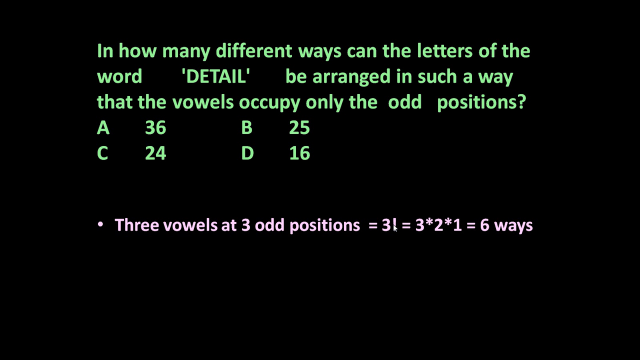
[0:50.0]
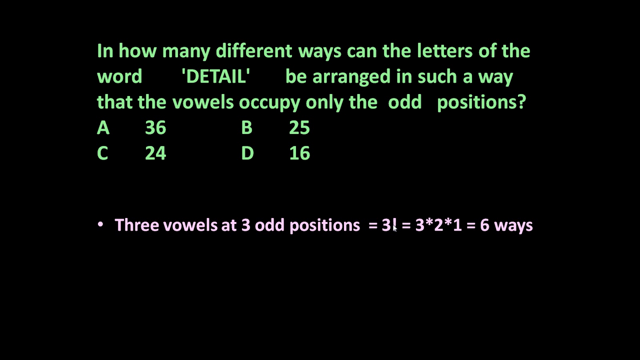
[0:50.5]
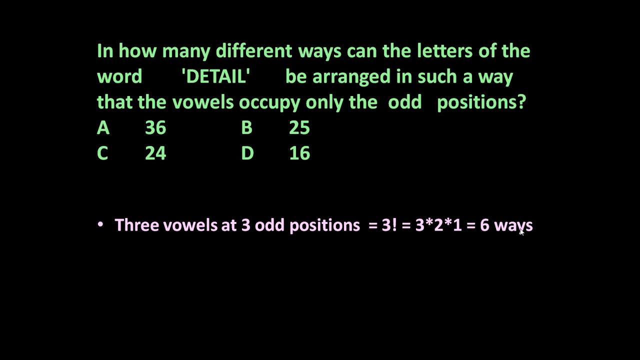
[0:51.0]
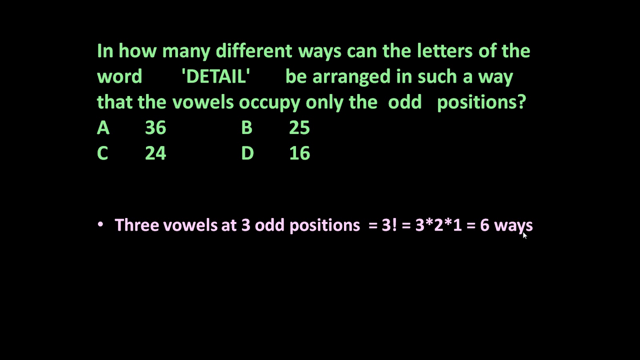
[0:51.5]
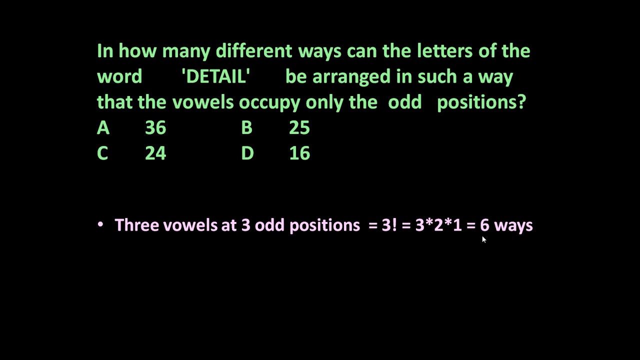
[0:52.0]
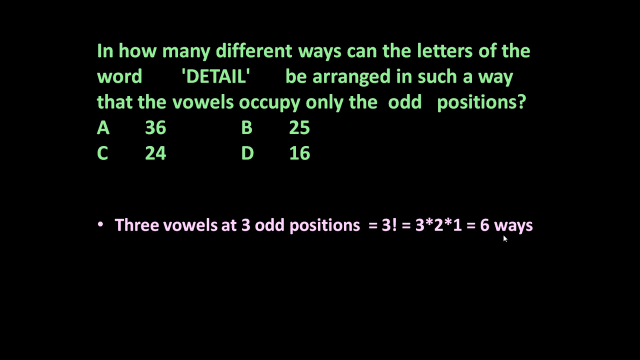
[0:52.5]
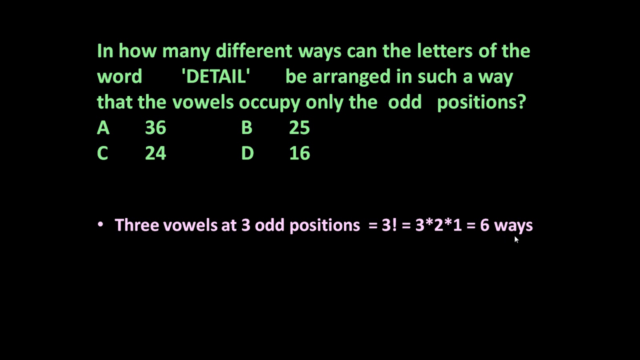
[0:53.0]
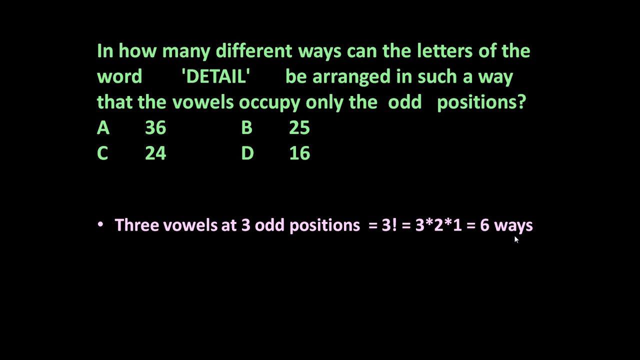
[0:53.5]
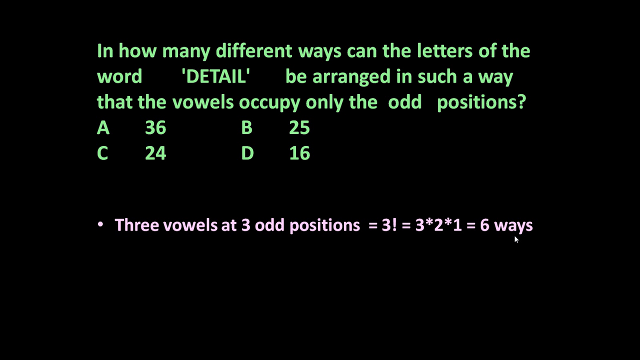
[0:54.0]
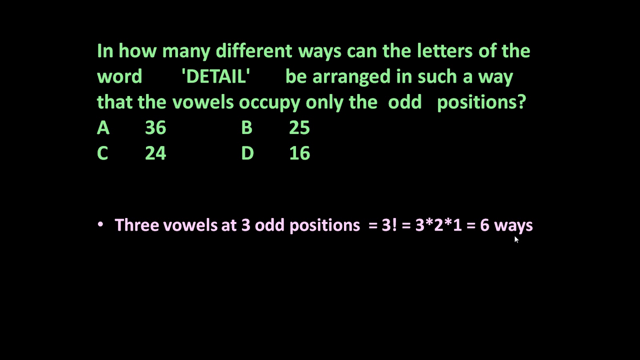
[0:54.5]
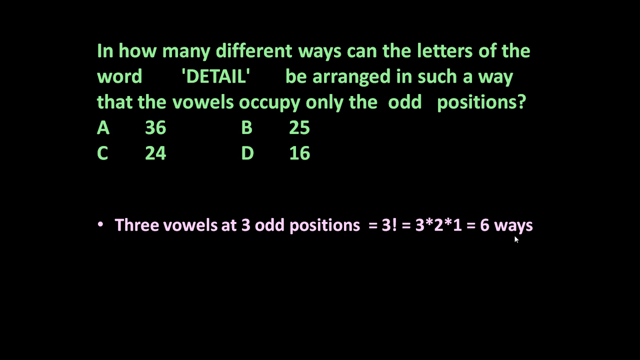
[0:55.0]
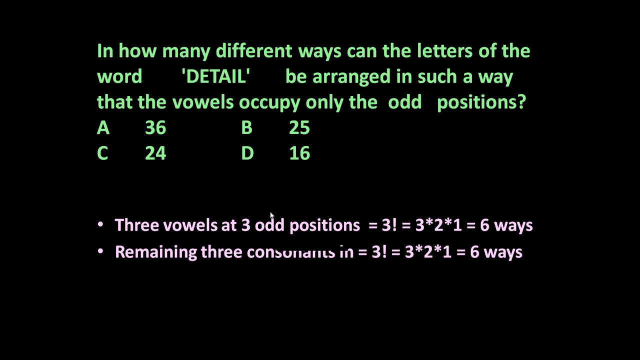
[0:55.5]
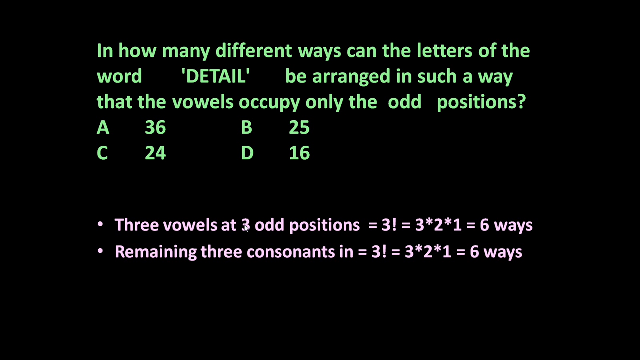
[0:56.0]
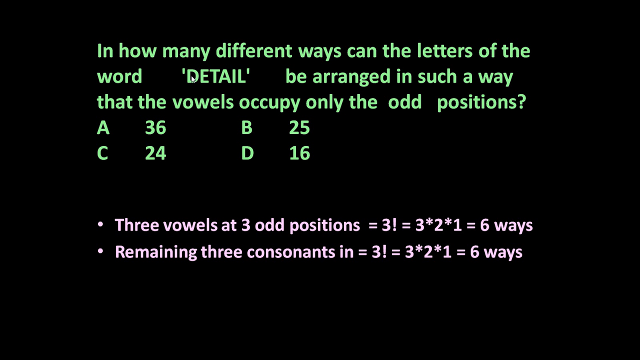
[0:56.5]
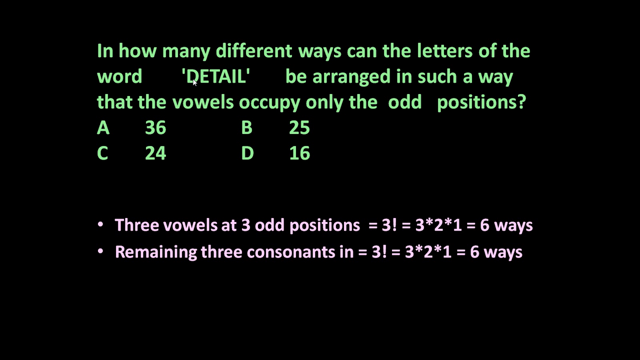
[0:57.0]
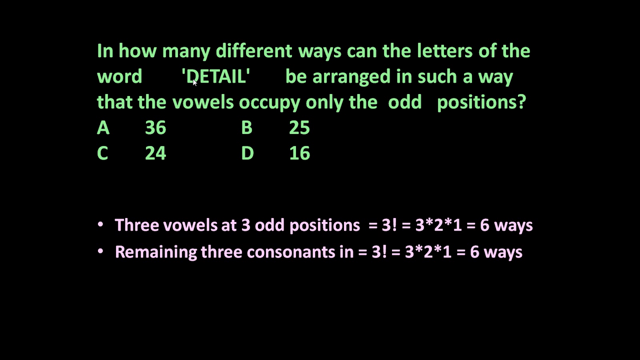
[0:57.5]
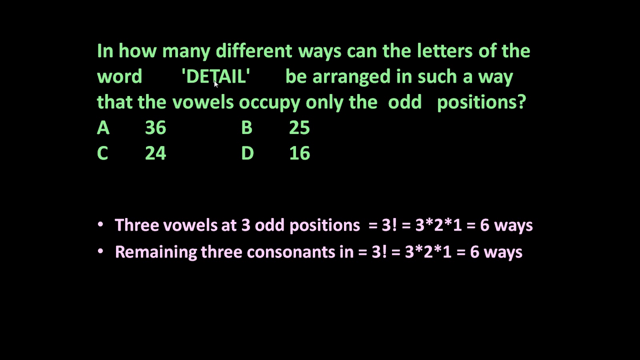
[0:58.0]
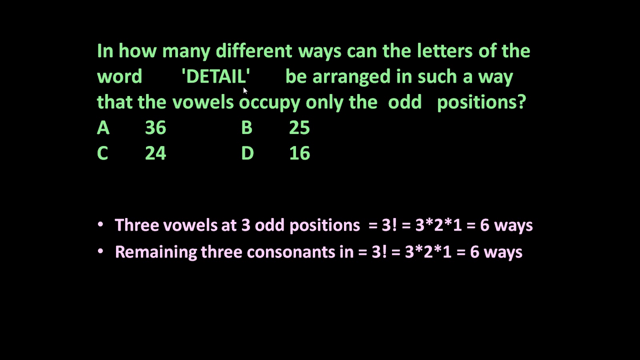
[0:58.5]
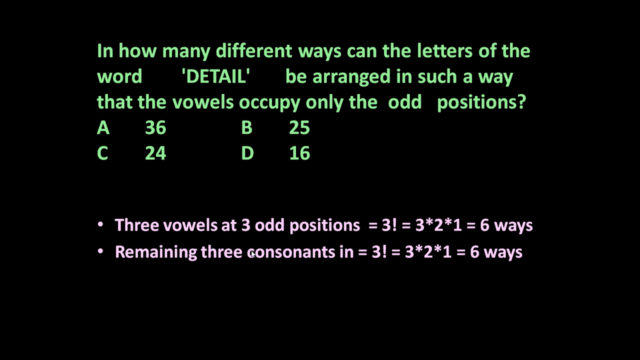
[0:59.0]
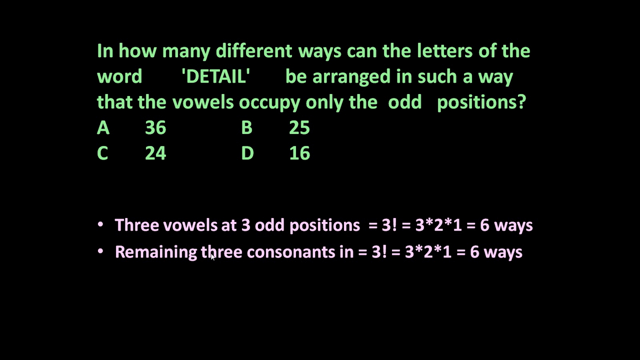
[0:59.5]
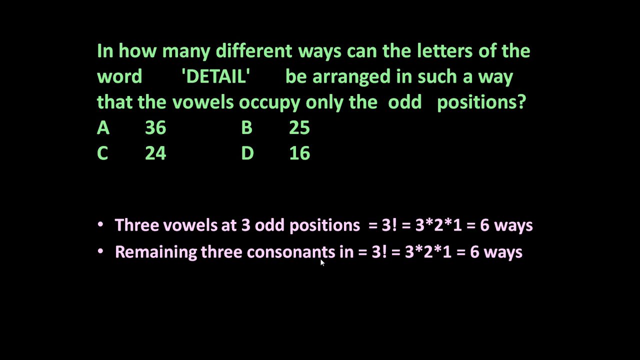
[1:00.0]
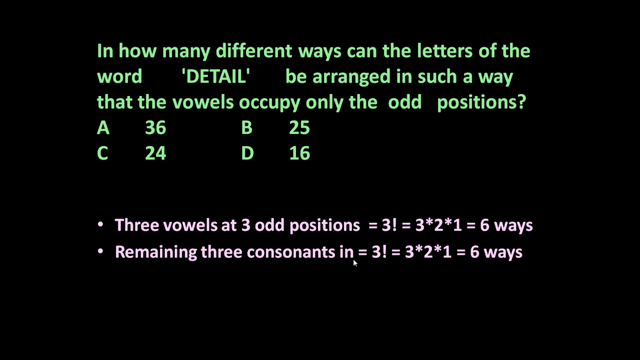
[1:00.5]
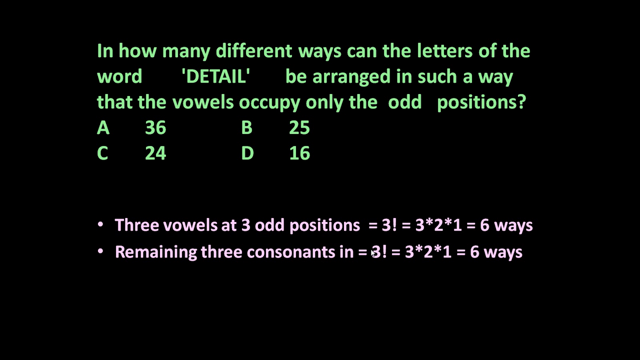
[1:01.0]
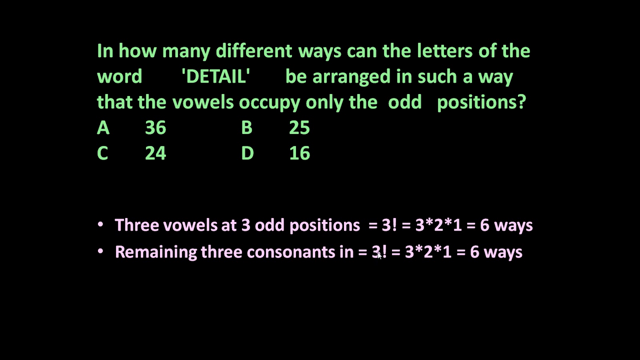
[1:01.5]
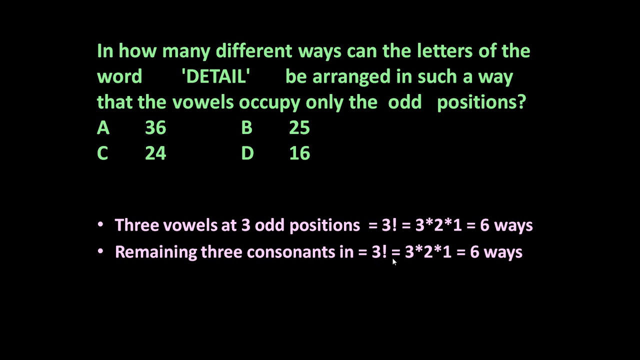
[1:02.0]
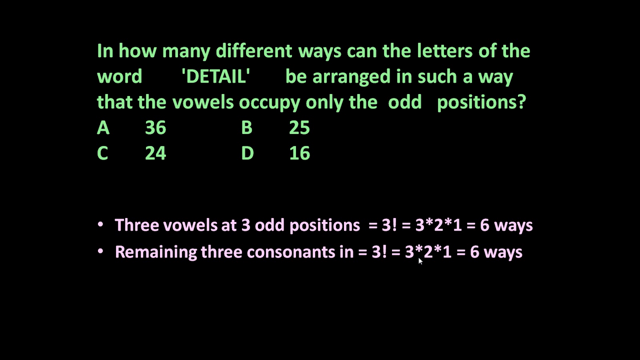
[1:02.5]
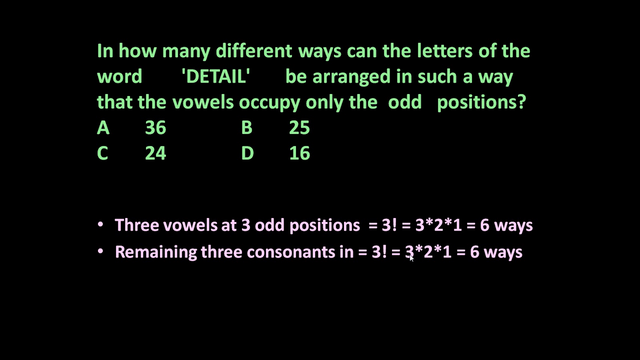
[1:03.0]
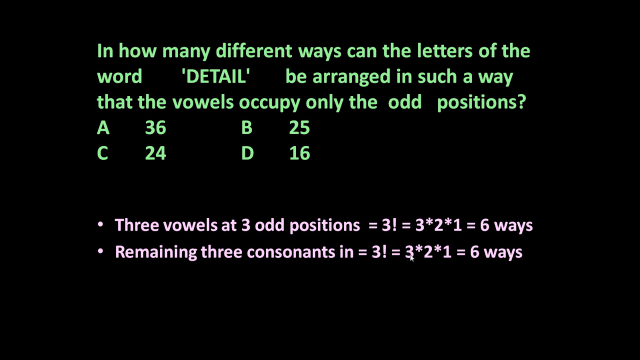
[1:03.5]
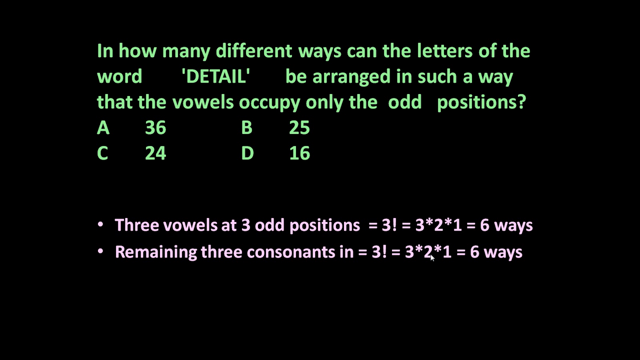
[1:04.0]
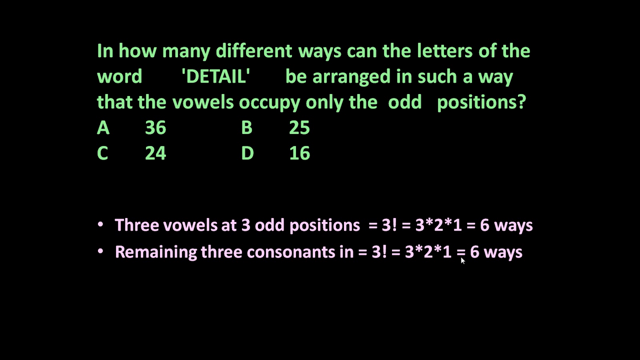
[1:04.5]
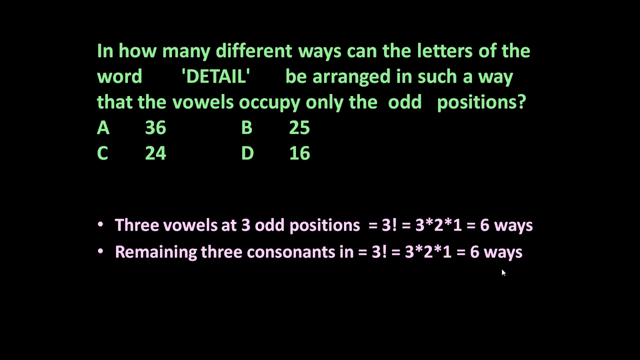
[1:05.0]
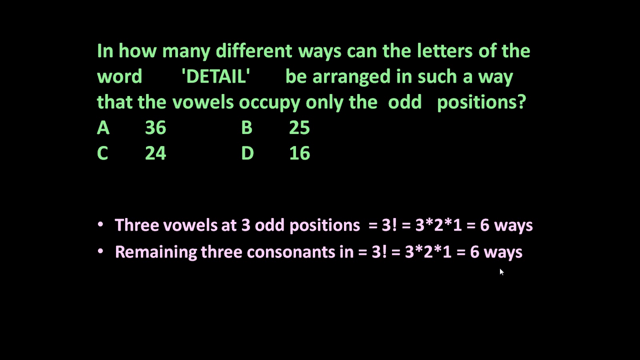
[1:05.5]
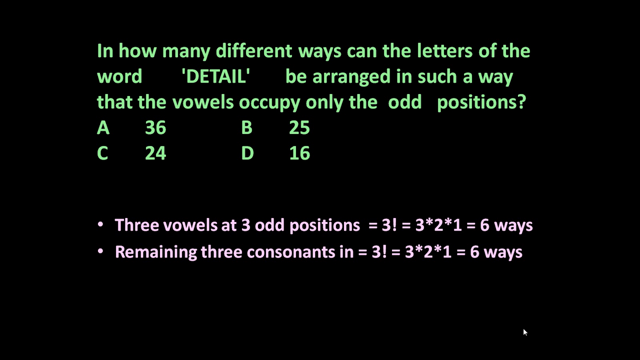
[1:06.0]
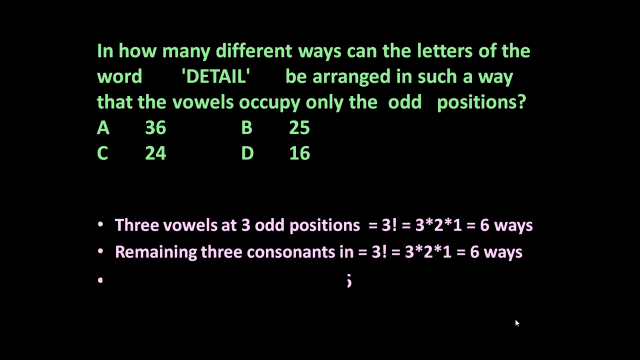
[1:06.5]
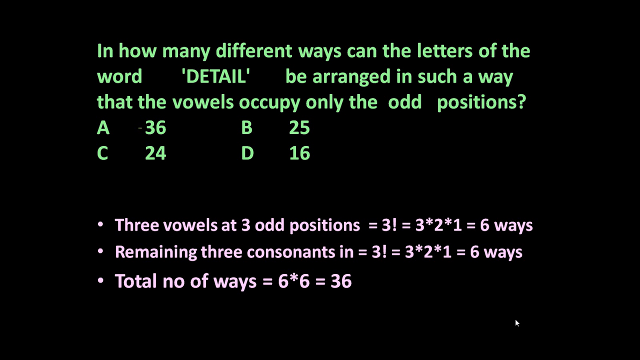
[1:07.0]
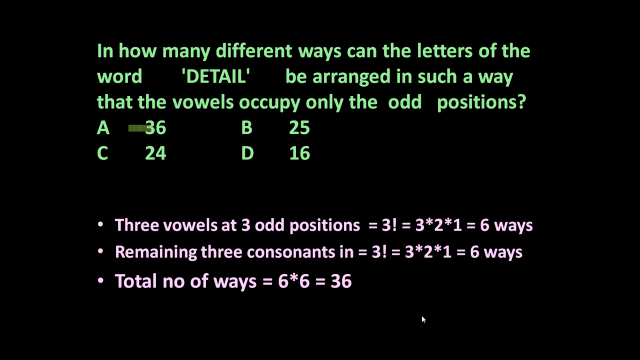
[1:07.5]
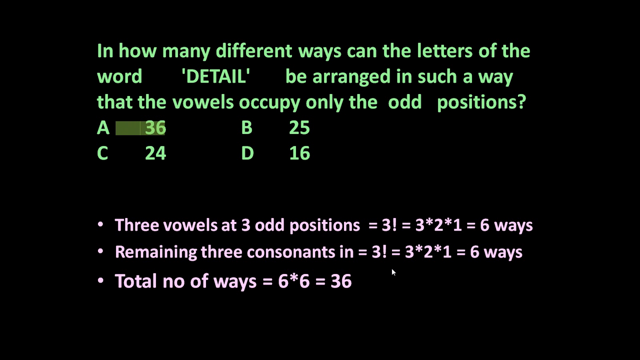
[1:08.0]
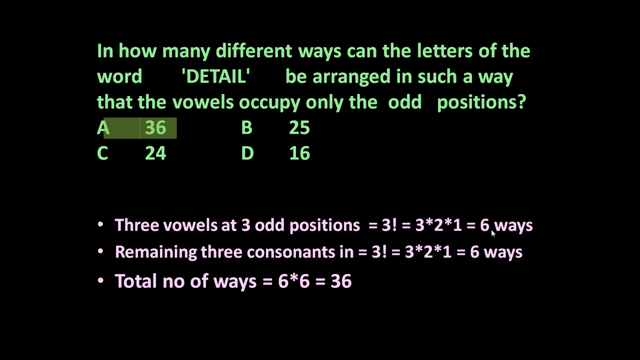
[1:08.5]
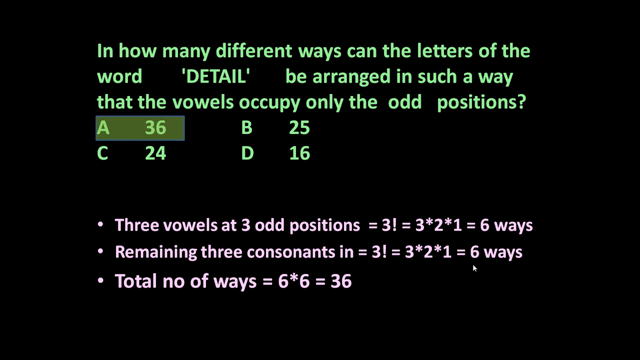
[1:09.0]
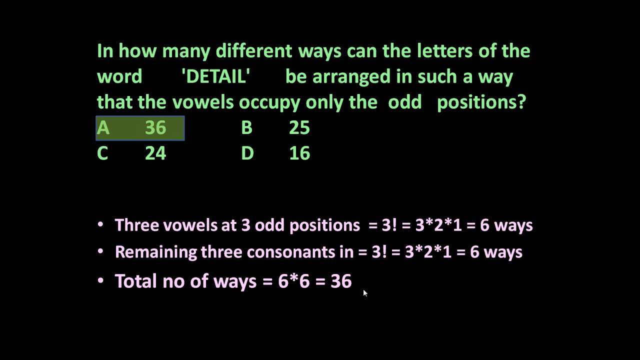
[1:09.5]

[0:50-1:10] On a black background, green text reads "in how many different ways can the letters of the word detail be arranged in such a way that the vowels occupy only the odd position." Below it, the first line reads "A 36, B 25" and the next reads "C 24, D 16." Below that, a white bullet point reads "three vowels at three odd positions, equals three! equals three*two*one, equals six ways." A second white bullet point appears below the first, reading "remaining three consonants in, equals three!, equals three*two*one asterisk, equals six ways." A third bullet point below reads "total no of ways equals six, times six, equals 36." The cursor appears and highlights certain words throughout the bottom three lines of text, underlining the word detail first and then the first occurrence of the word ways, before moving around the three bullet points.